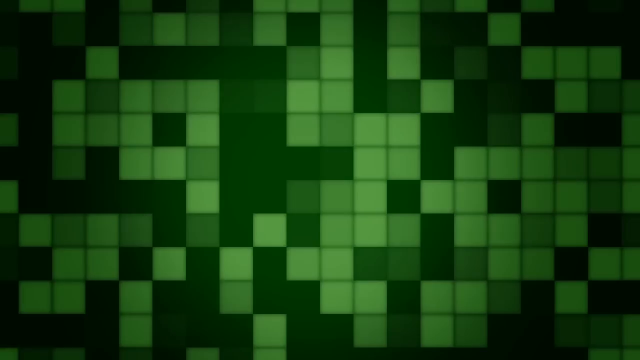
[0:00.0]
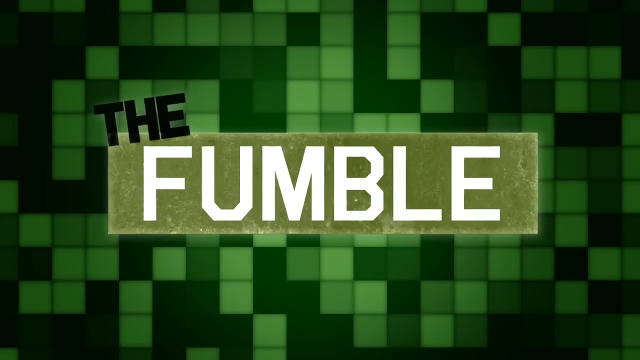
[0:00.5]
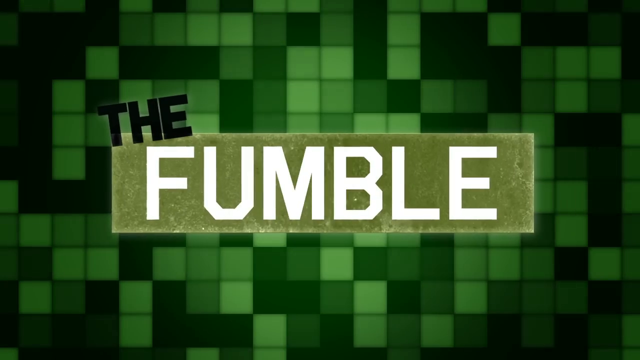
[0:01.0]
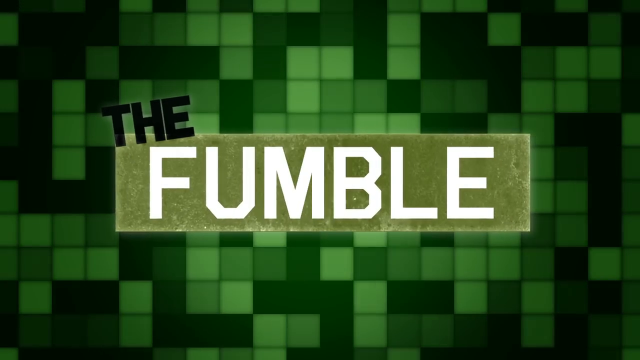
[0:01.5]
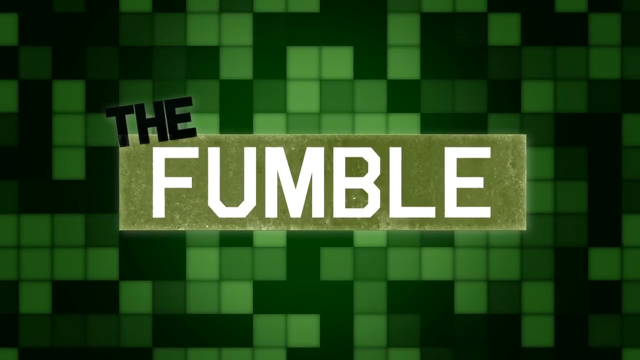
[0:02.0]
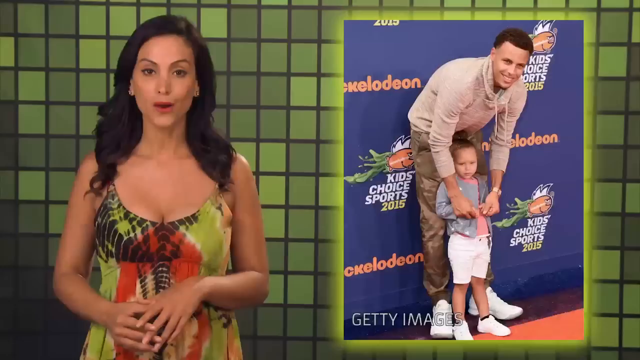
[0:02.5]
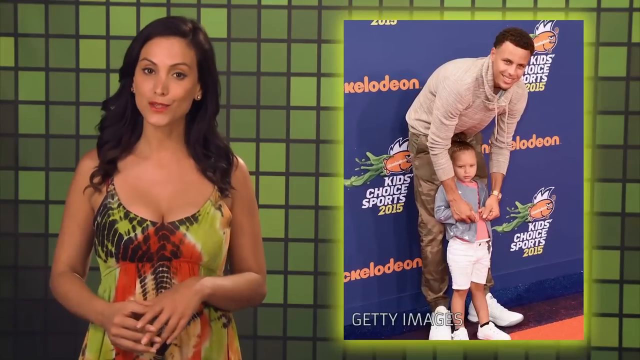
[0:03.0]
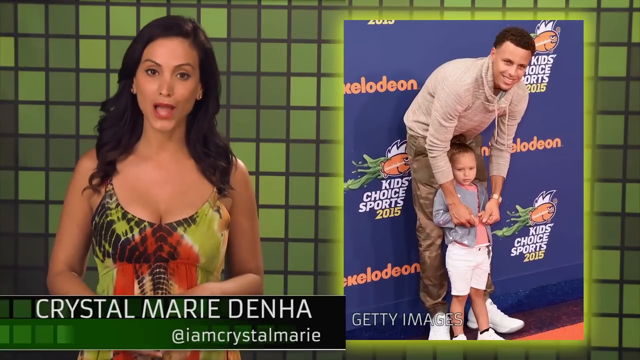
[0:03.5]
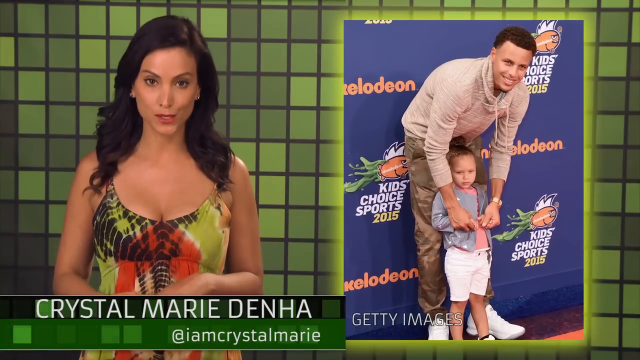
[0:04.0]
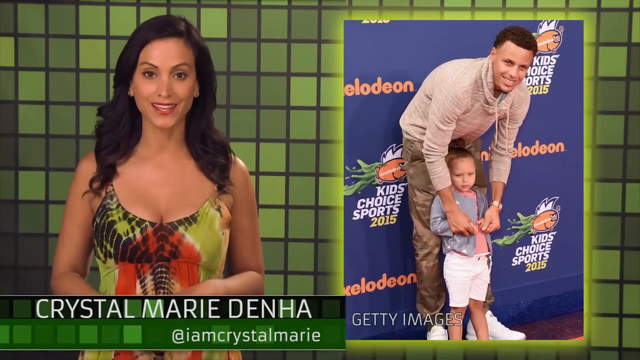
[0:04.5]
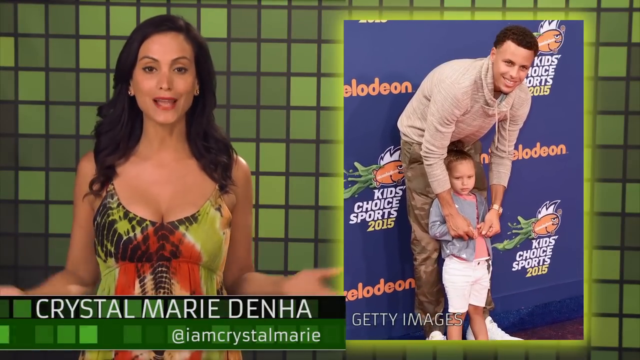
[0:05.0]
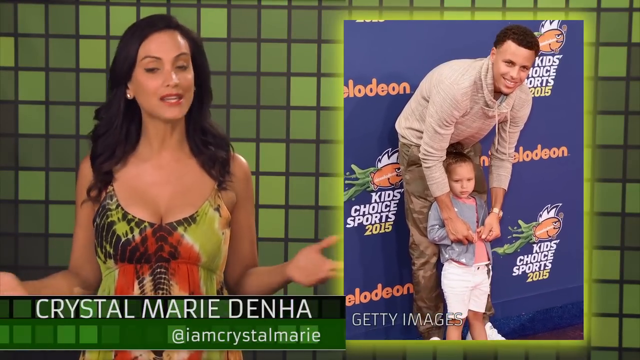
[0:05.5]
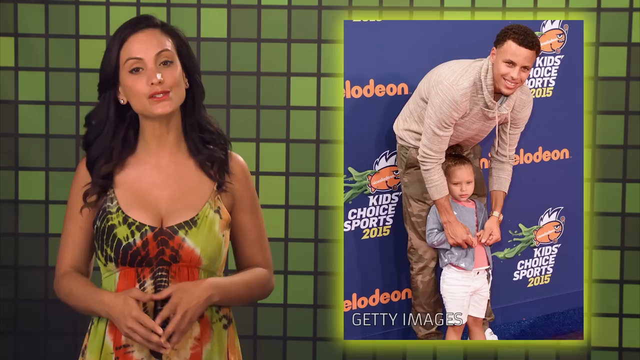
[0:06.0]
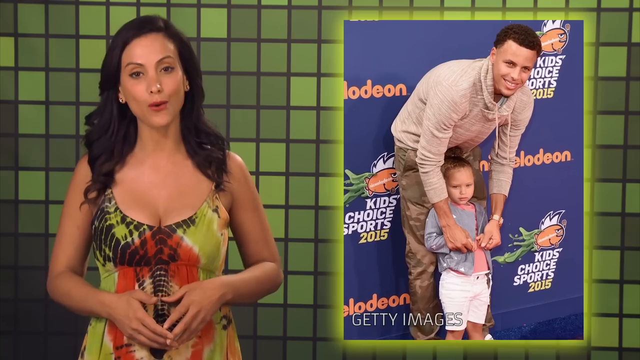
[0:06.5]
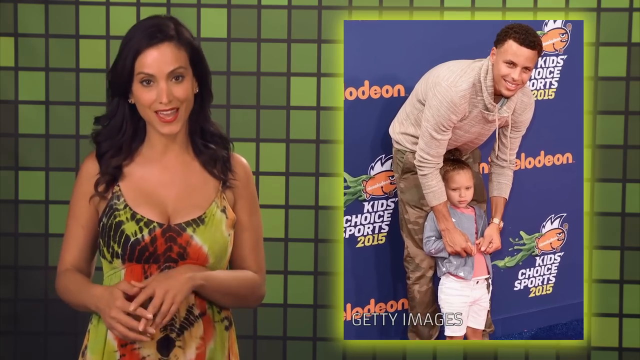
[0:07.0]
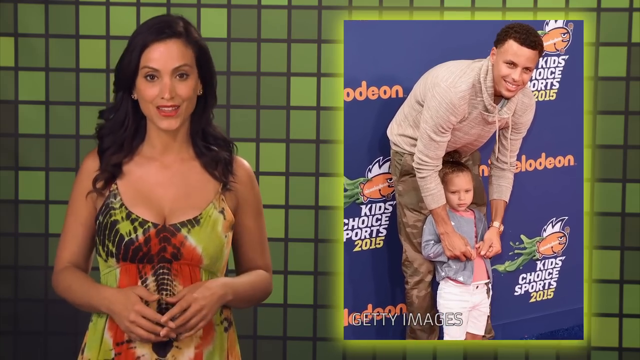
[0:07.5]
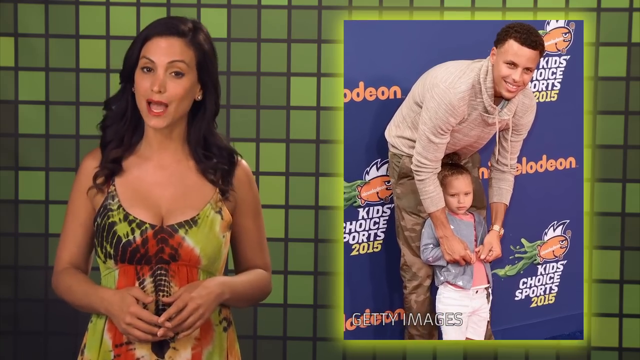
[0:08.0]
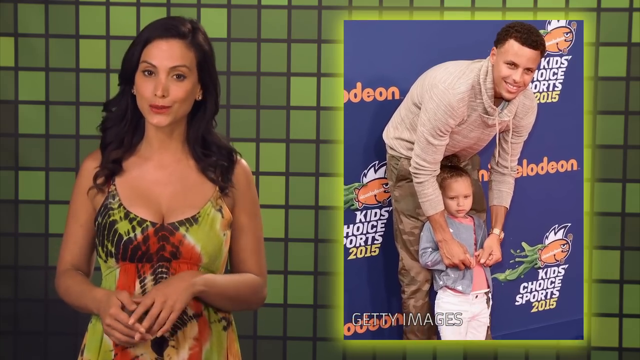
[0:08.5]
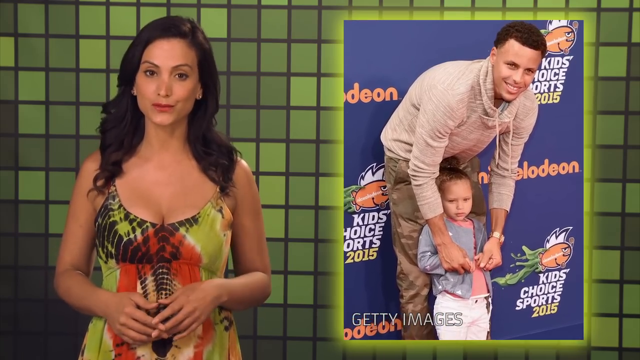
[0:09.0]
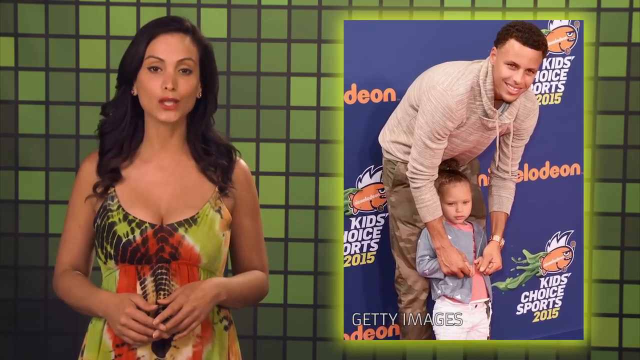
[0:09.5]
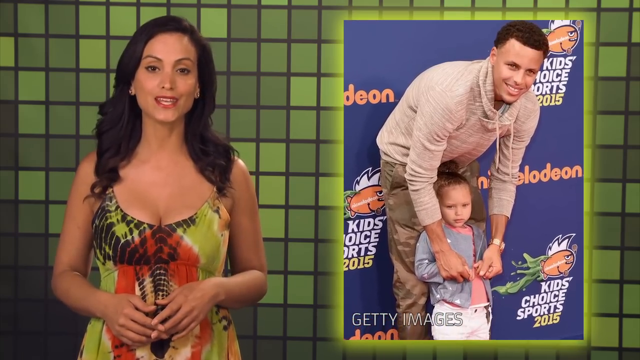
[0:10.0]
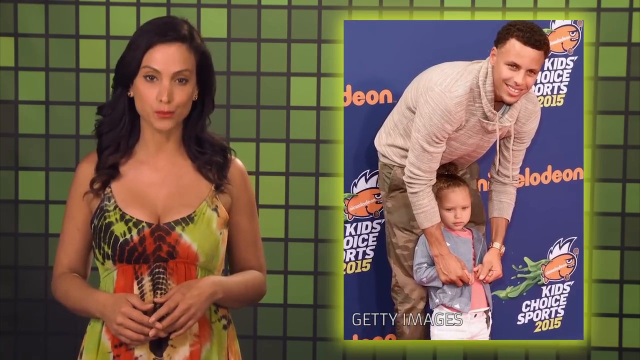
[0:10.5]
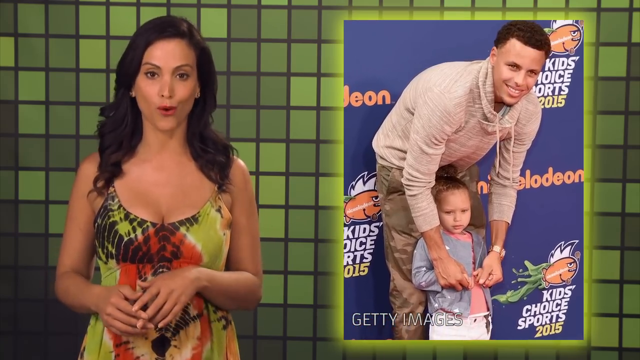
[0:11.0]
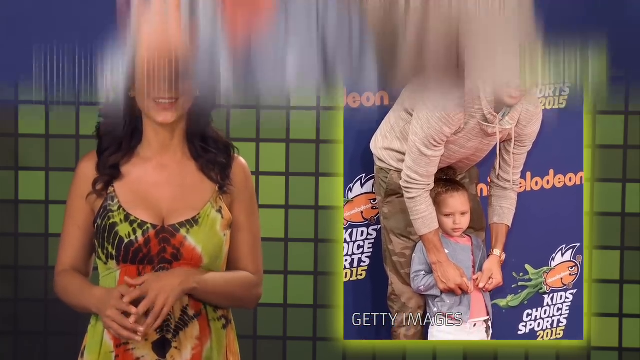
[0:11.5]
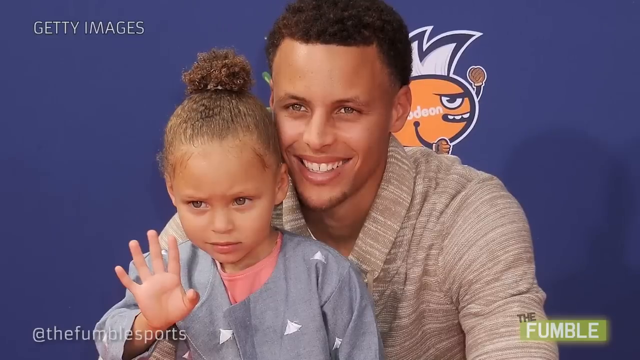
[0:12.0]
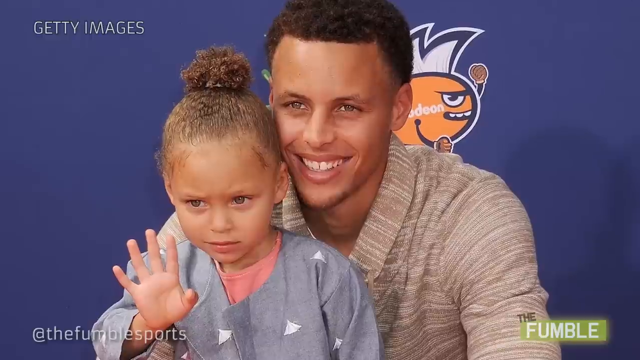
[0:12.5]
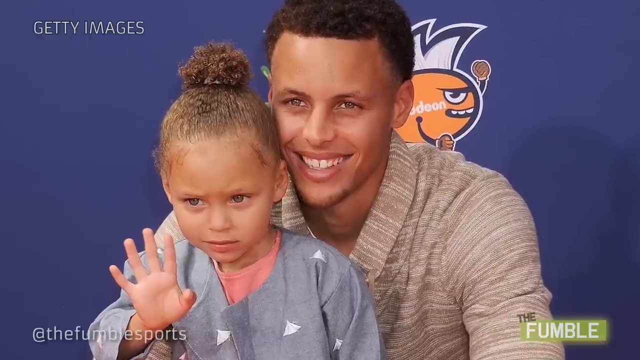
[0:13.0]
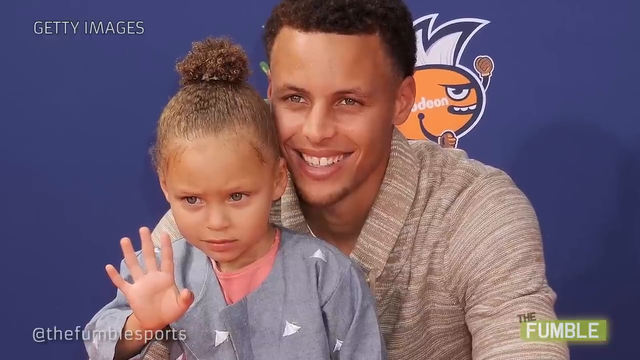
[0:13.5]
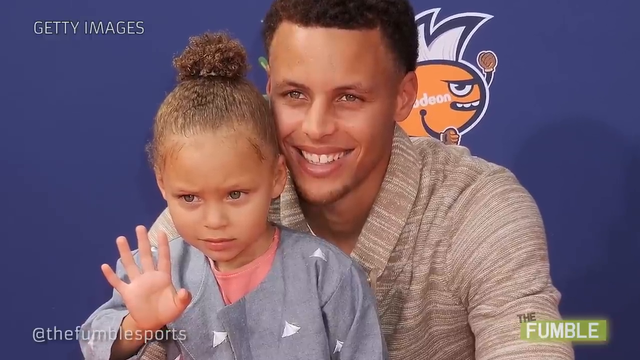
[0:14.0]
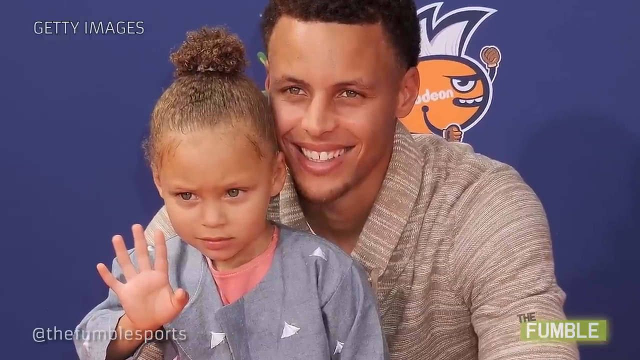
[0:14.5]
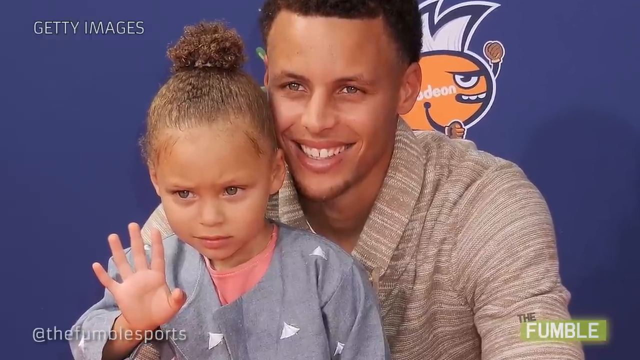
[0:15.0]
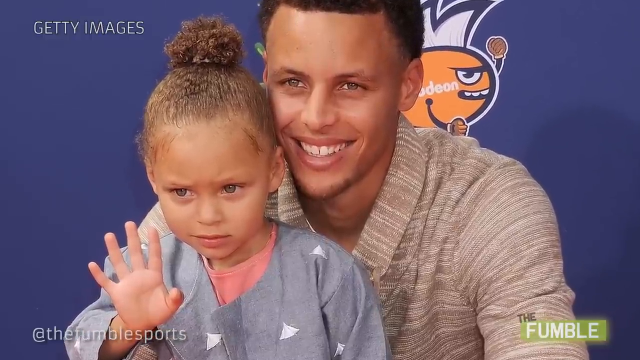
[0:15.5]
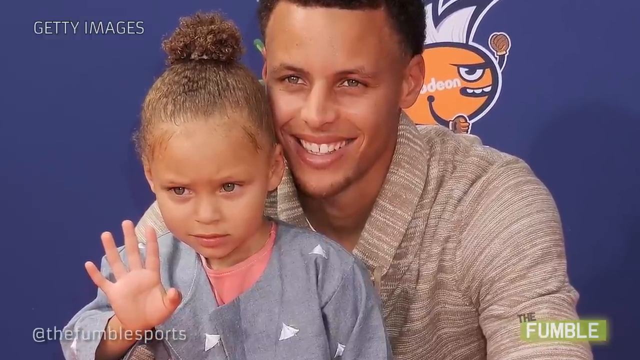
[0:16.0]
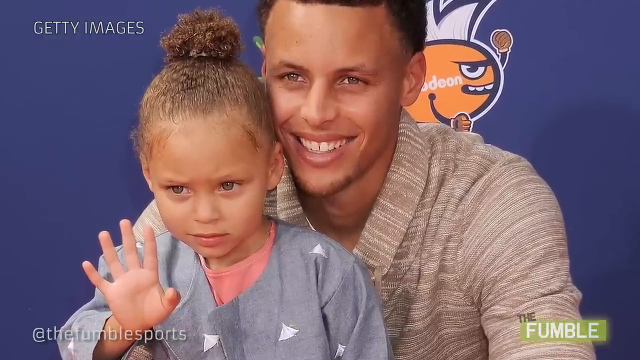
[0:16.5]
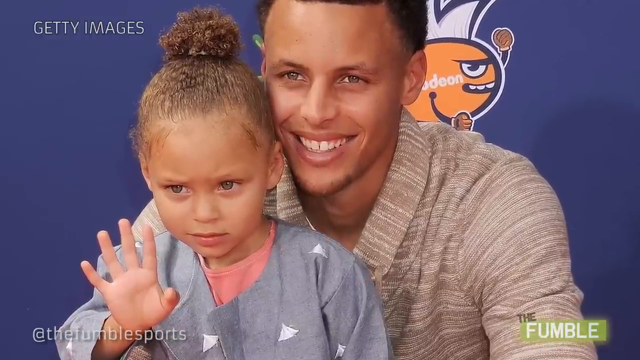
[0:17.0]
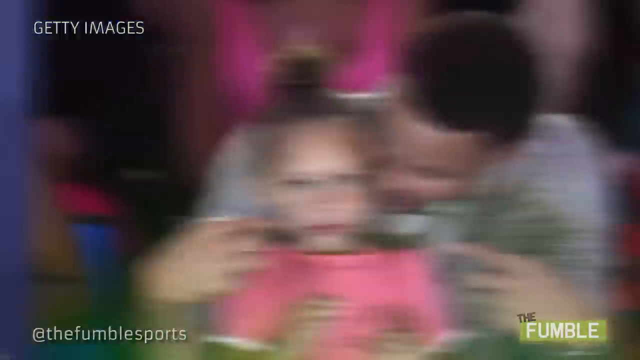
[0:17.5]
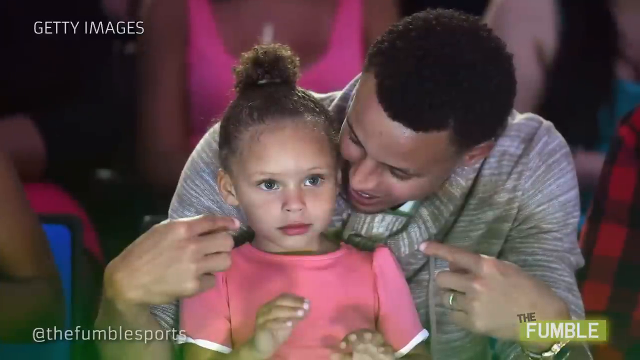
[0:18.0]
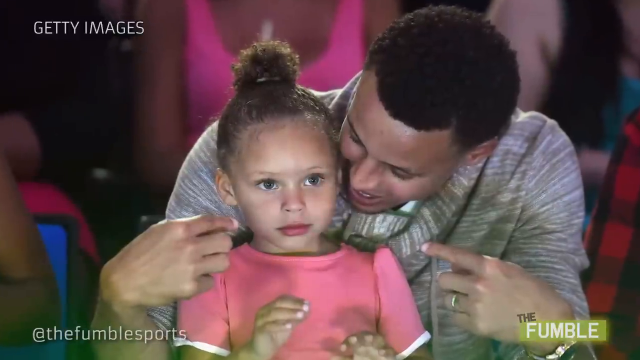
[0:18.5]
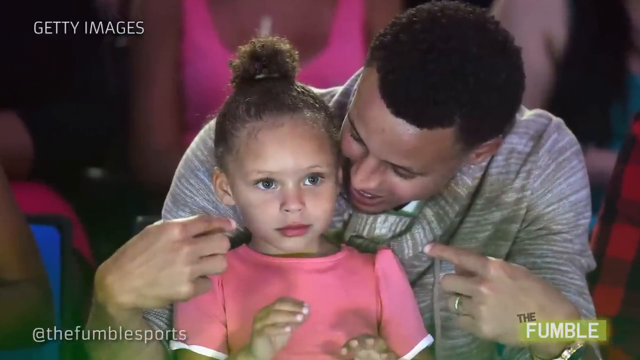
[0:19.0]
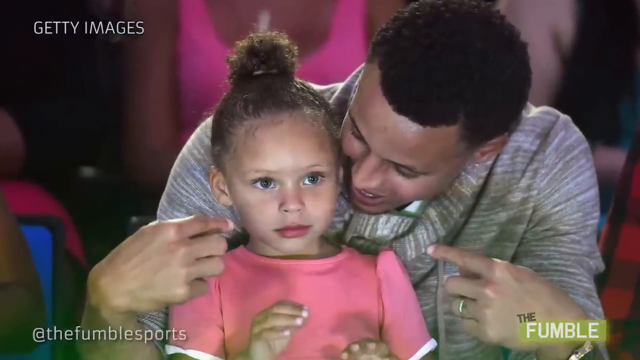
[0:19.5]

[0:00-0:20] The video opens on a computer-generated green checkered background. Text reading "The Fumble" appears, and the green checkered boxes twinkle, so they are animated. The words "The Fumble" then flash toward the camera and dissipate. A brunette newscaster stands in front of the green backdrop, with a photo next to her of a very tall man, apparently a basketball player, who is bending over with his hands on a small child. The backdrop shows "Nickelodeon kids' choice sports." The woman is talking, and her name appears at the bottom of the screen. She smiles and blinks, puts her arms out and brings them back together, and continues to sort of nod and smile, turning her head very slightly and nodding it up and back down. Next comes a close-up still photo of the man with the child; both are smiling, and the child is waving at a camera.